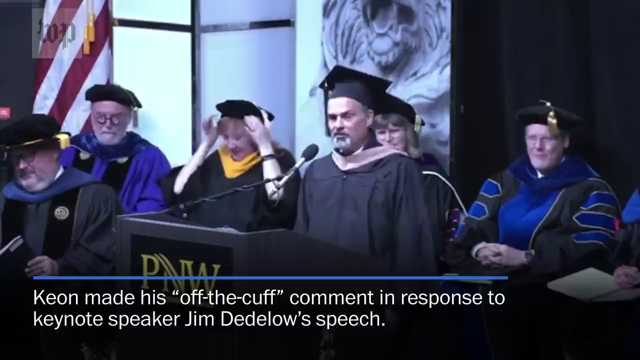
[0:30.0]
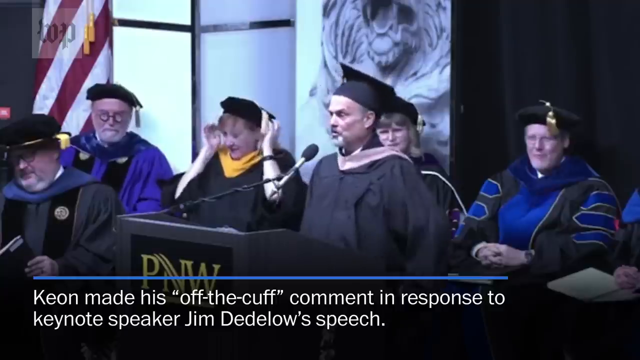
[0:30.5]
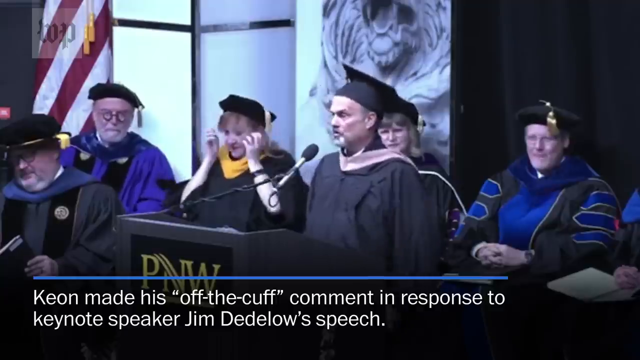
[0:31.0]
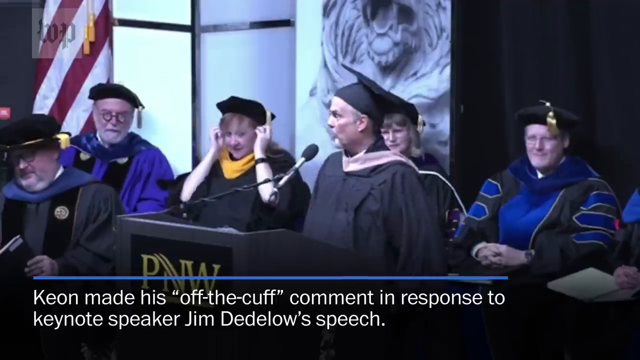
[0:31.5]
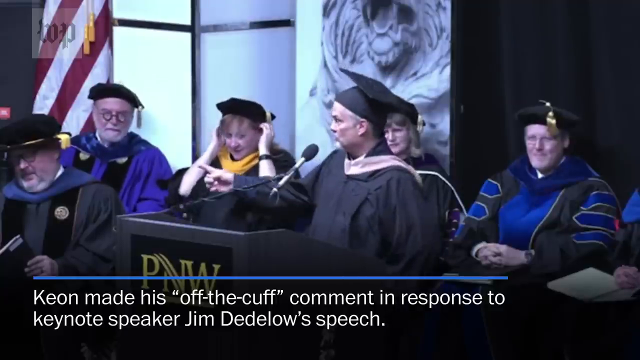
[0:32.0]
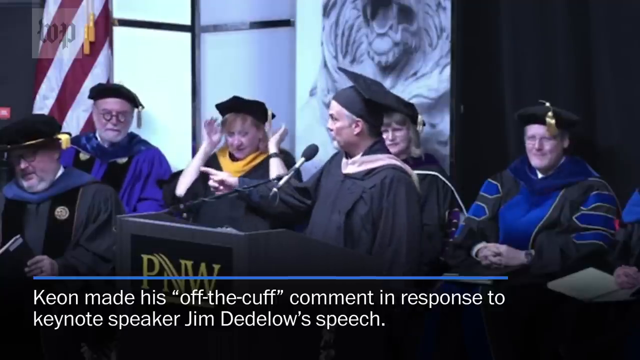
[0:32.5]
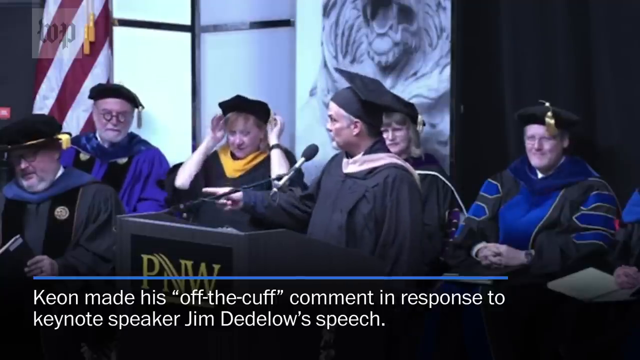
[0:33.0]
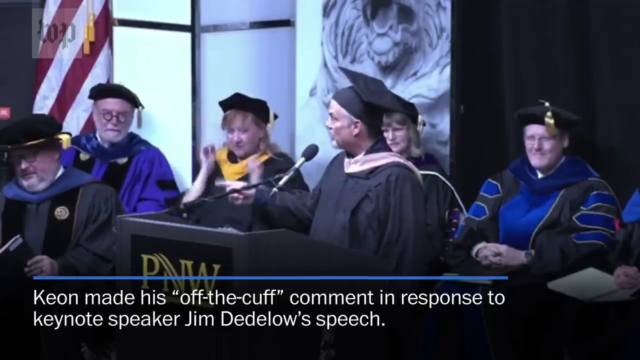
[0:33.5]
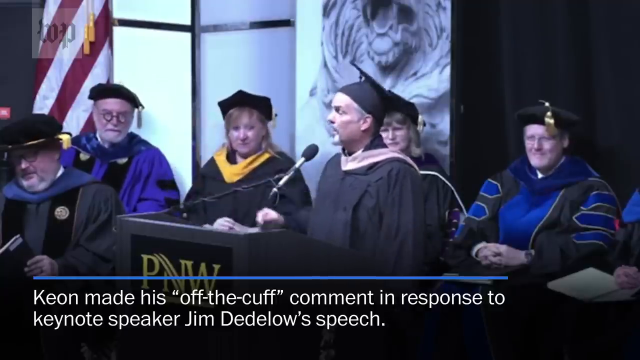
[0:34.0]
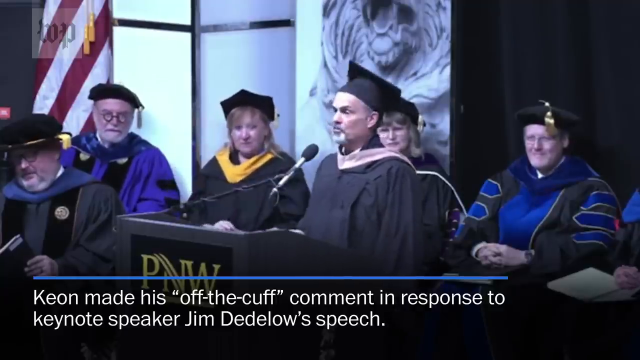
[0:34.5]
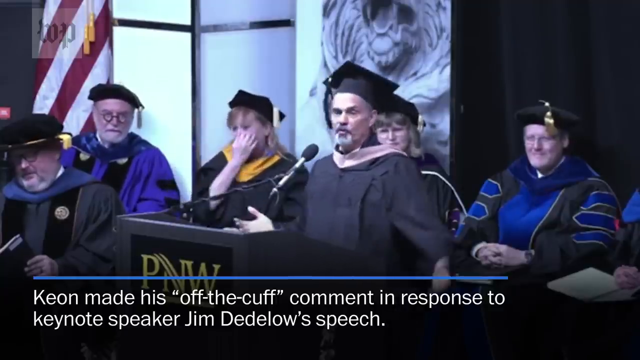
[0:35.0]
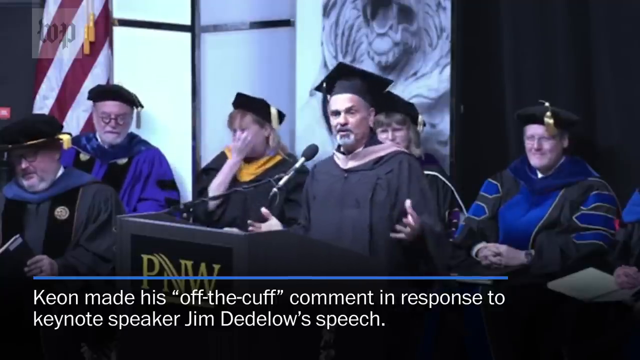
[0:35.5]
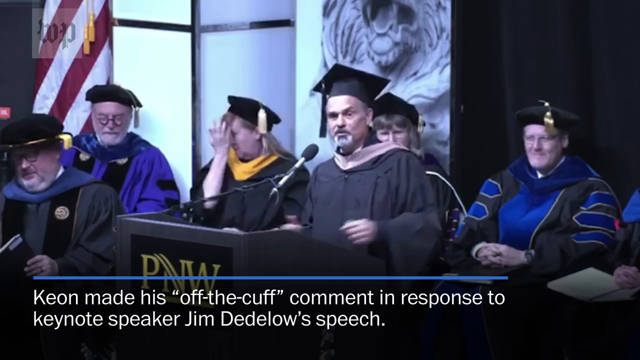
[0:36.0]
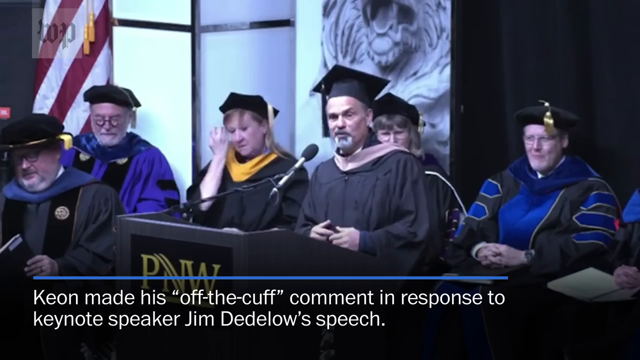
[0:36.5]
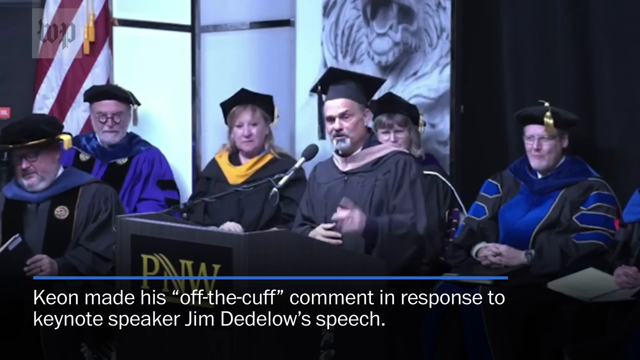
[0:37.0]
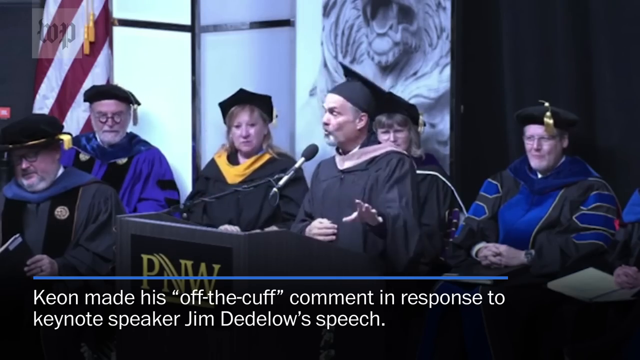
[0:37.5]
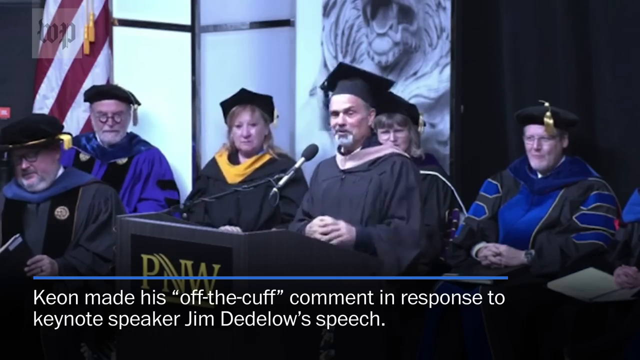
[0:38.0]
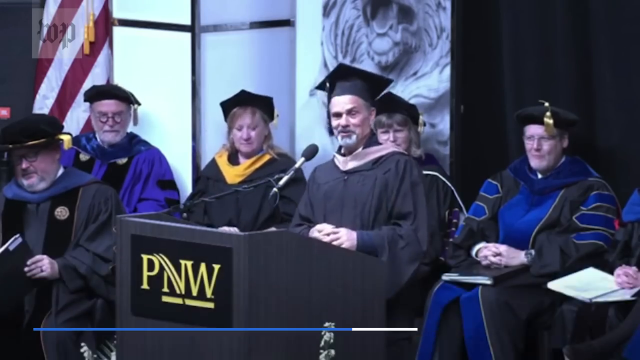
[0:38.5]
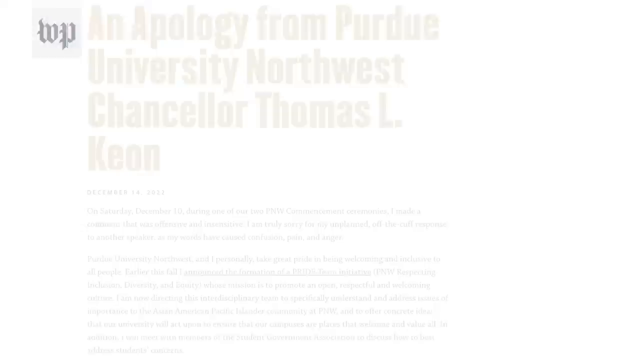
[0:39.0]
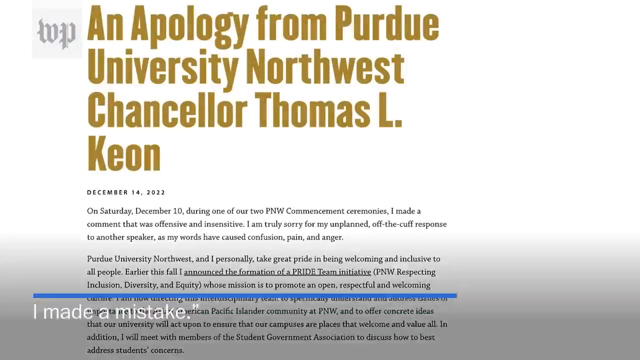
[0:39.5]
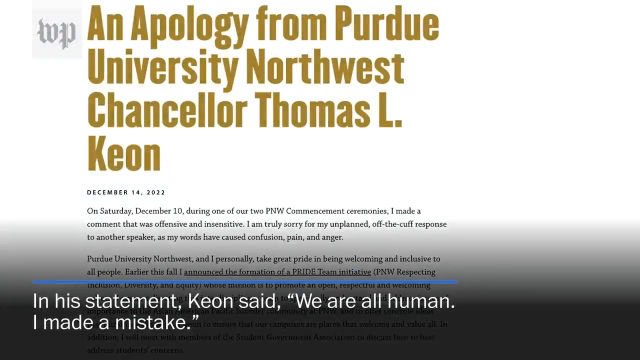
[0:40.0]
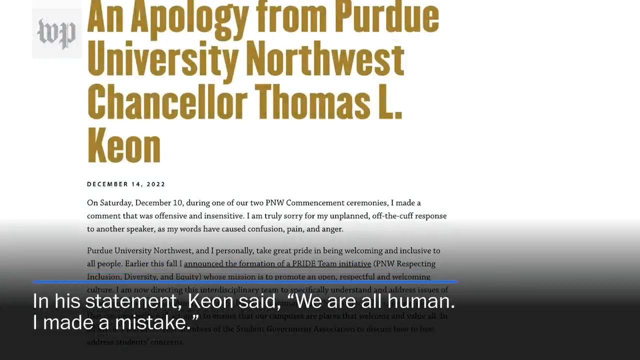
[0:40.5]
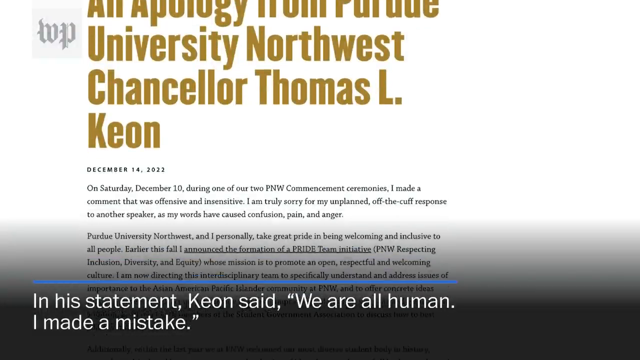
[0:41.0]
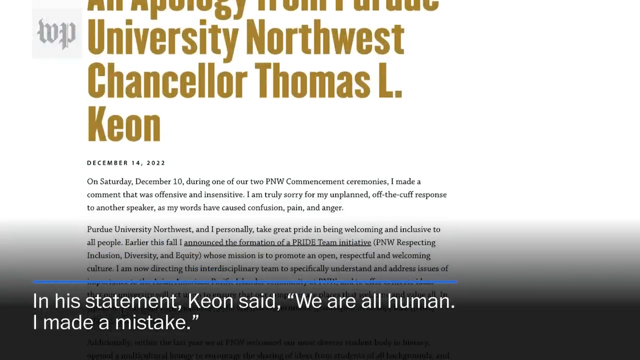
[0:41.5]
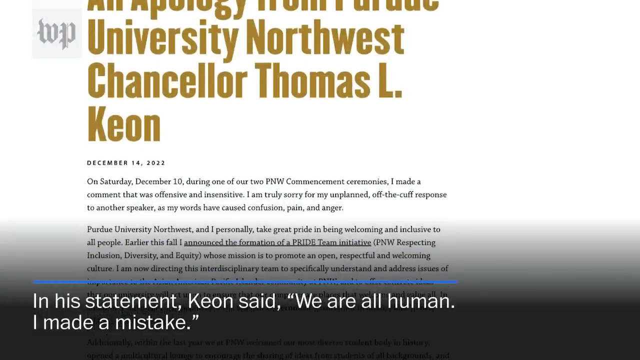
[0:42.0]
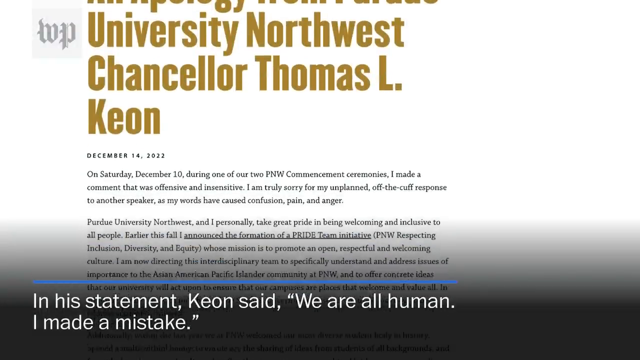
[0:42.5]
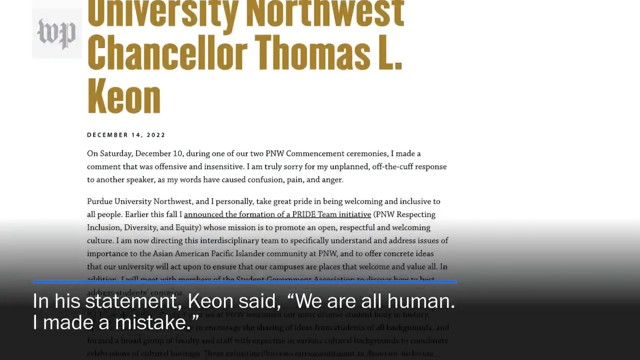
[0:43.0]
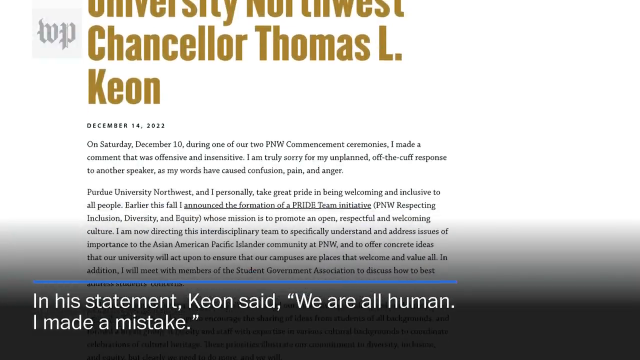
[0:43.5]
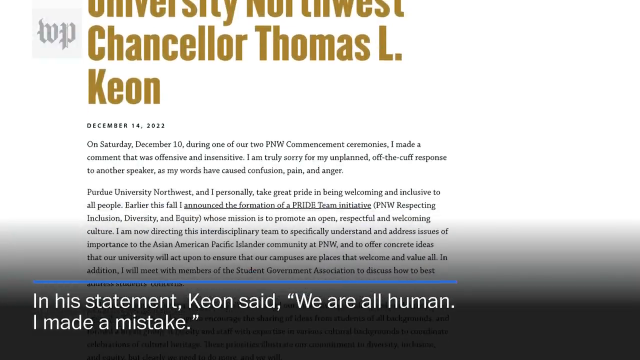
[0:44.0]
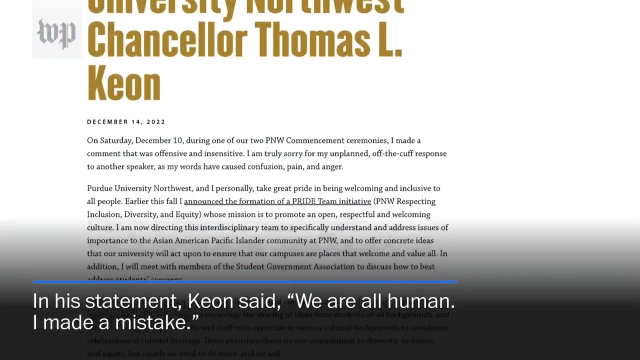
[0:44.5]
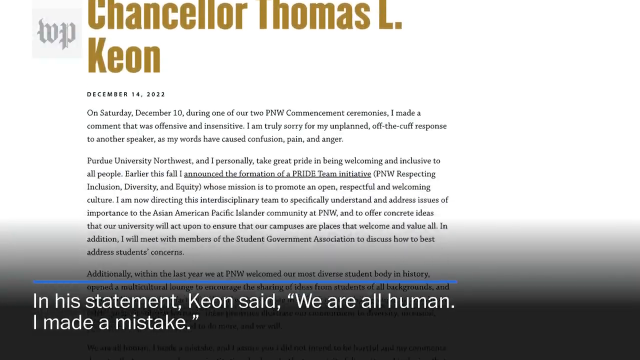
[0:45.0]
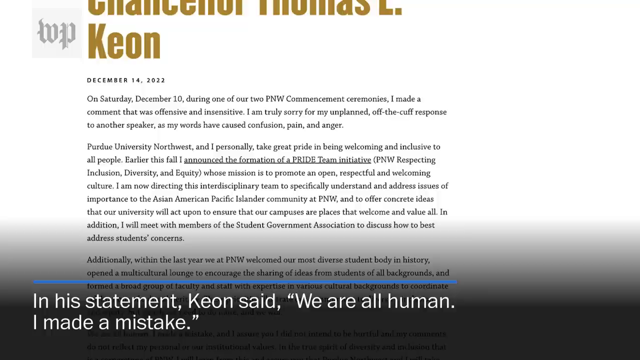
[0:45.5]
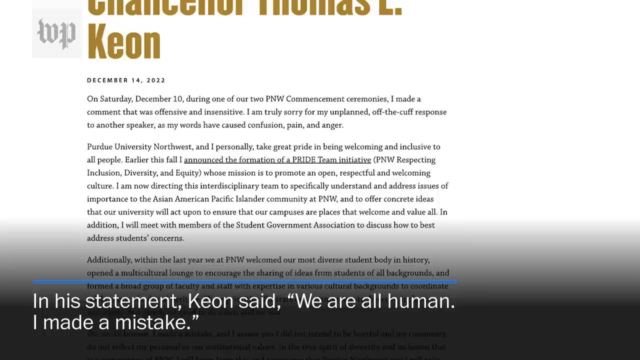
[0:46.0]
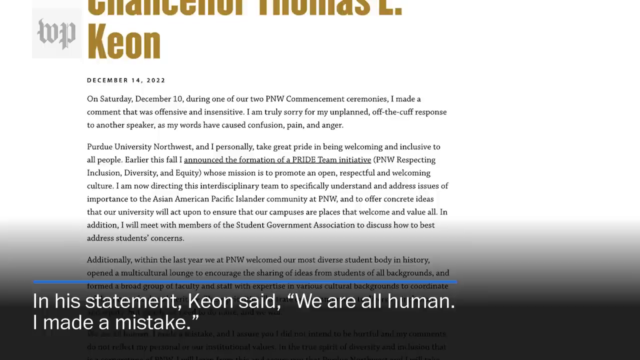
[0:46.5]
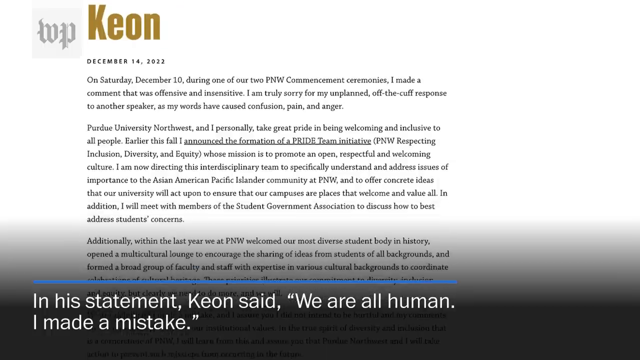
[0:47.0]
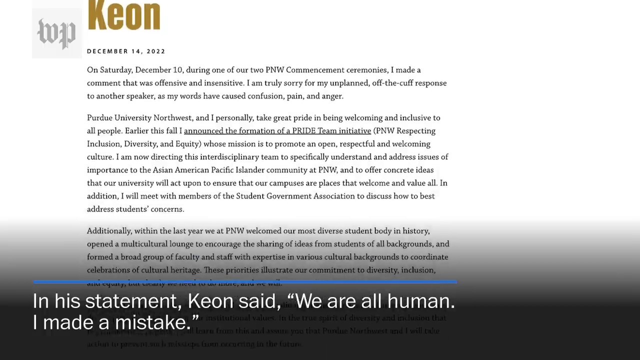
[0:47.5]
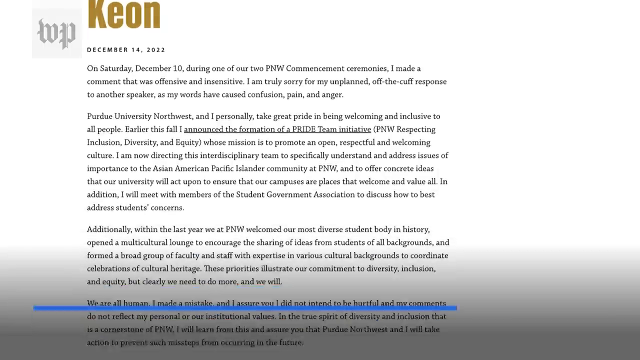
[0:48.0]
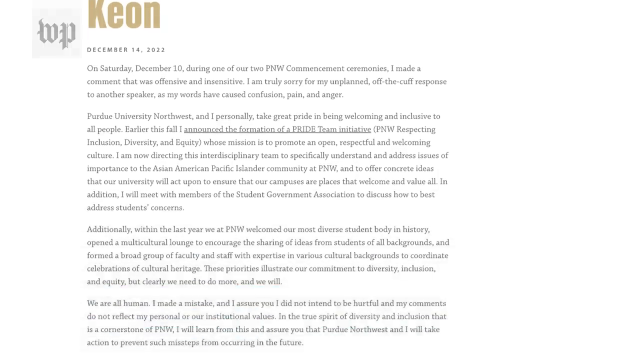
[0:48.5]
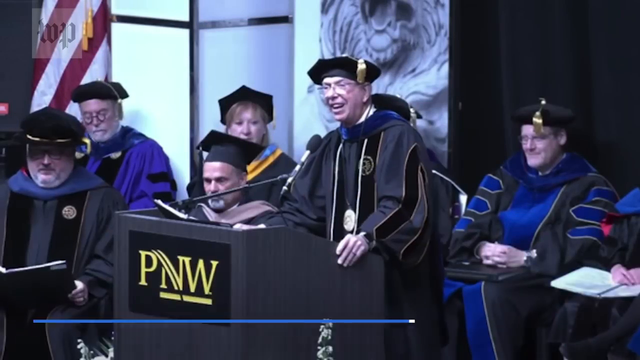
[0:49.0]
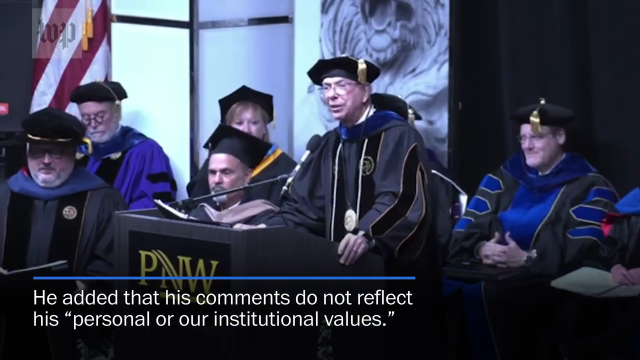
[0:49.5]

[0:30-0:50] Keon stands at the podium in his black gown with a pink scarf. He appears to be saying something and points at someone else. Text at the bottom of the screen reads "Keon made his off-the-cuff comment in response to keynote speaker Jim Dedelow's speech." In the background, a woman in a black gown with a gold scarf makes a disgusted face, and everyone on screen appears to be uncomfortable. Keon then looks at something in front of him and reaches a hand out to emphasize something he is saying. The screen then changes to a news article that reads "an apology from Purdue University Northwest Chancellor Thomas L. Keon, December 14, 2022. On Saturday, December 10, during one of our two Pacific Northwest commencement ceremonies, I made a comment that was offensive and insensitive. I am truly sorry for my unplanned off-the-cuff response to another speaker as my words have caused confusion, pain, and anger."